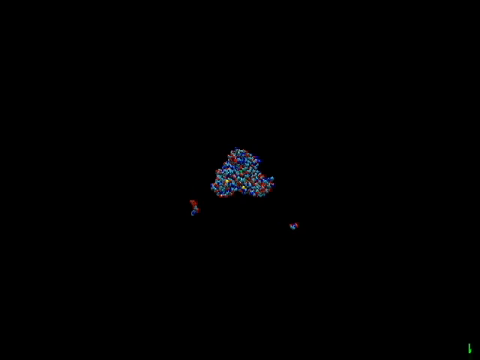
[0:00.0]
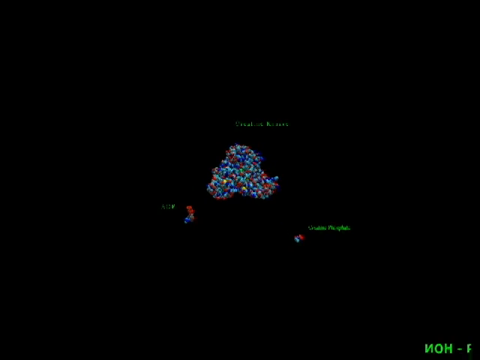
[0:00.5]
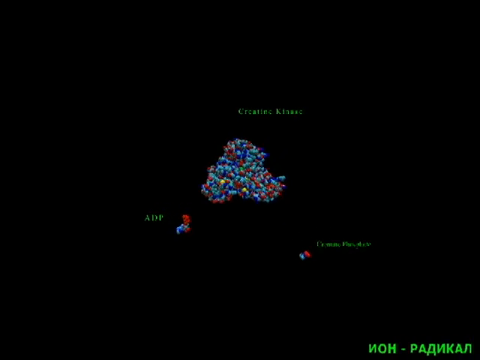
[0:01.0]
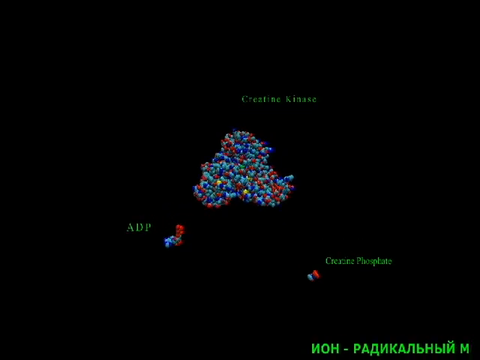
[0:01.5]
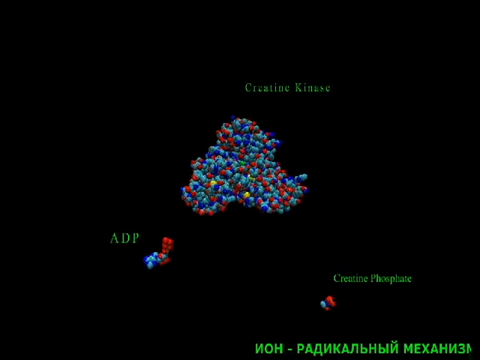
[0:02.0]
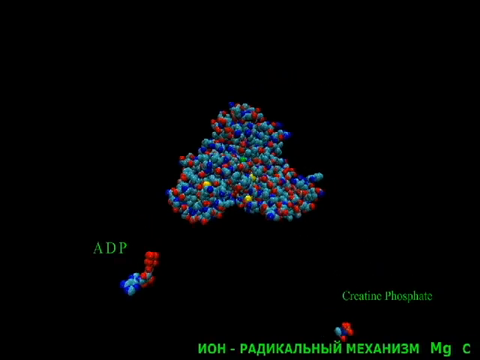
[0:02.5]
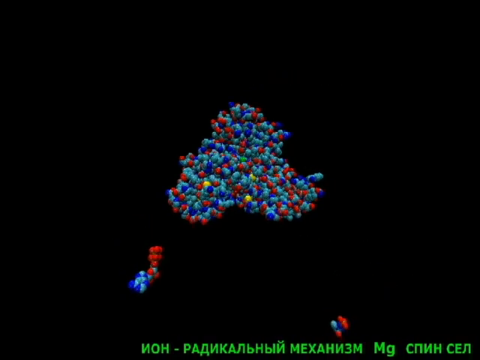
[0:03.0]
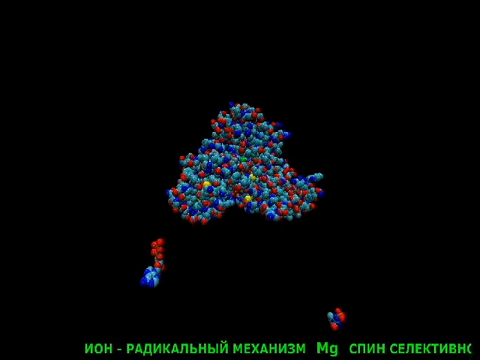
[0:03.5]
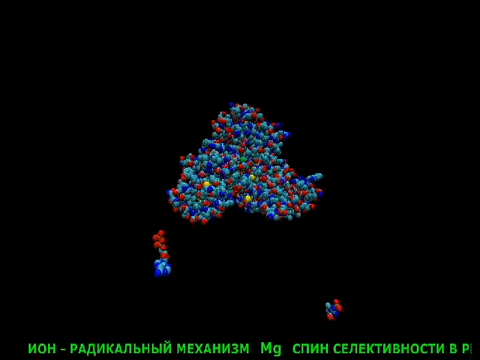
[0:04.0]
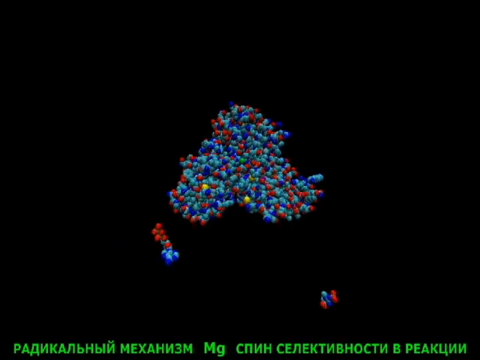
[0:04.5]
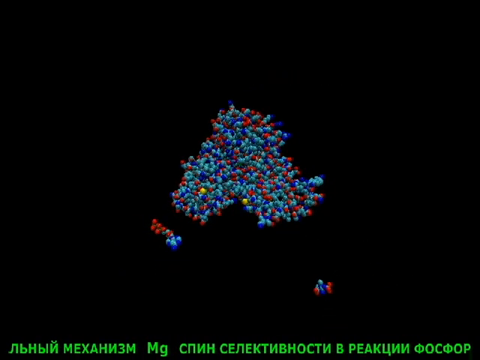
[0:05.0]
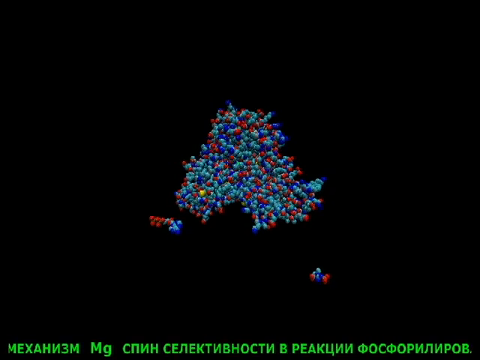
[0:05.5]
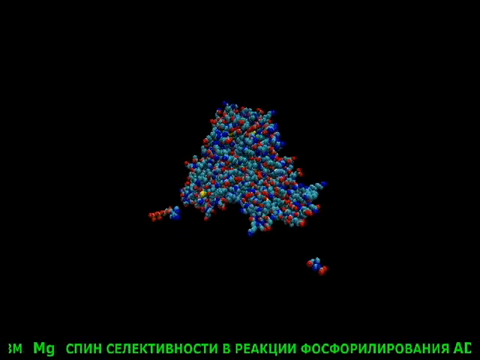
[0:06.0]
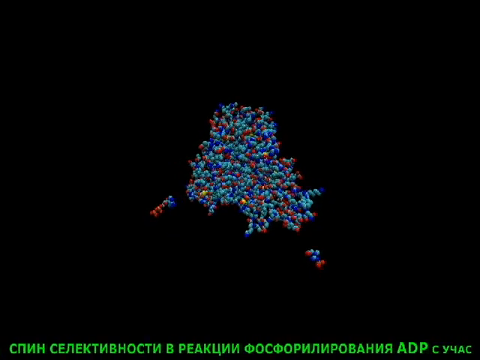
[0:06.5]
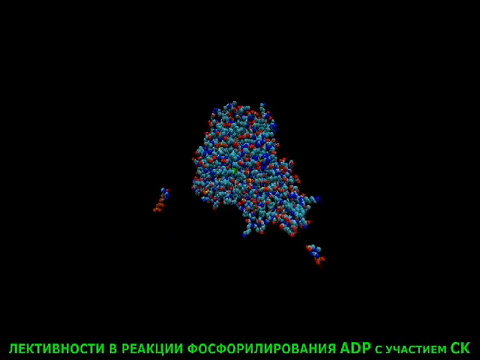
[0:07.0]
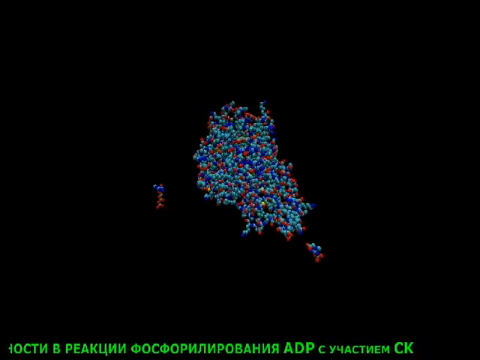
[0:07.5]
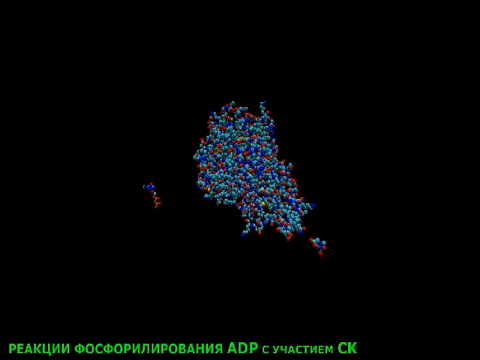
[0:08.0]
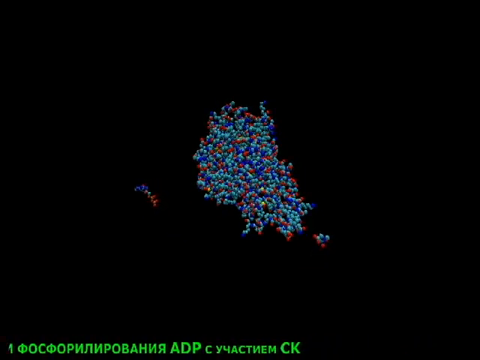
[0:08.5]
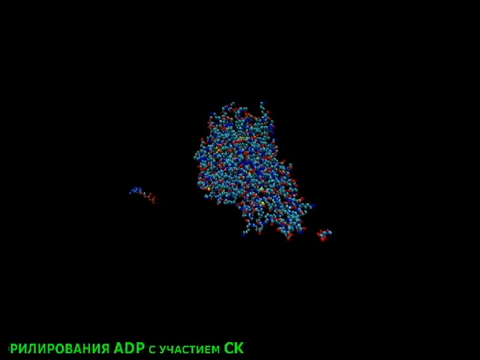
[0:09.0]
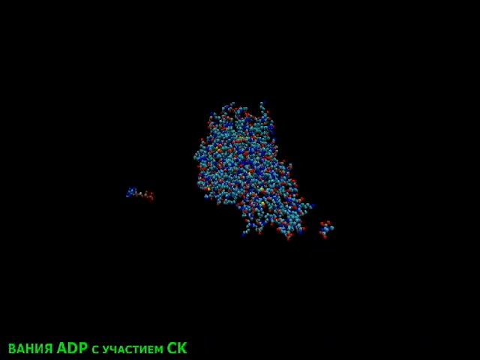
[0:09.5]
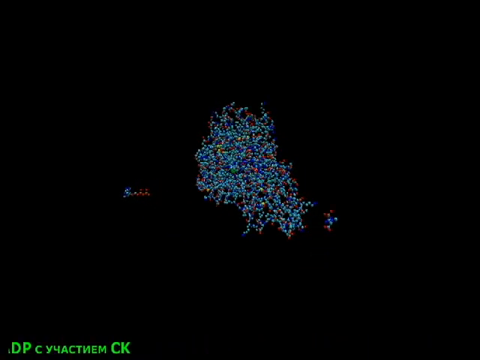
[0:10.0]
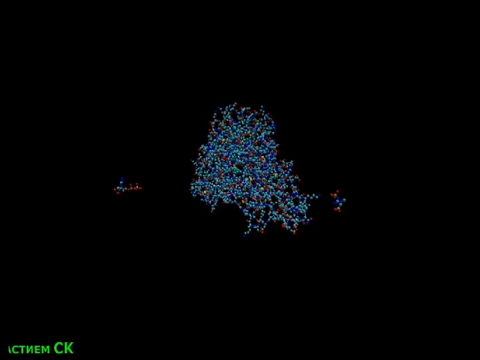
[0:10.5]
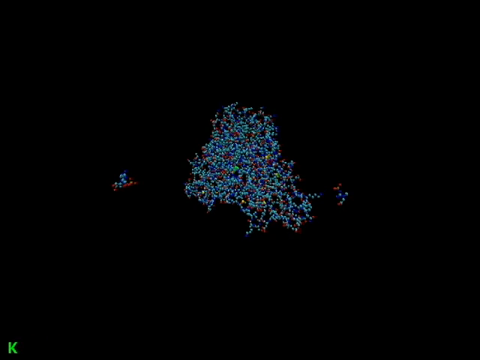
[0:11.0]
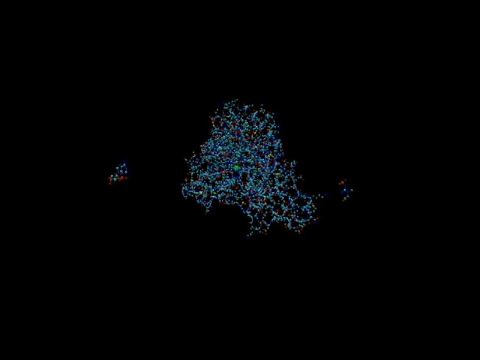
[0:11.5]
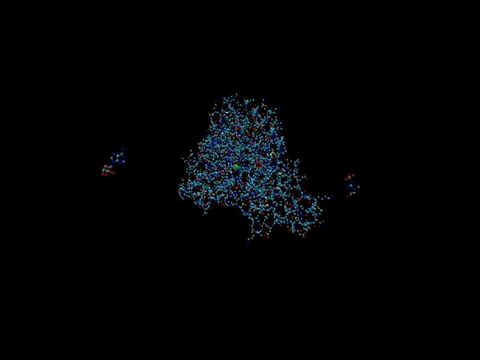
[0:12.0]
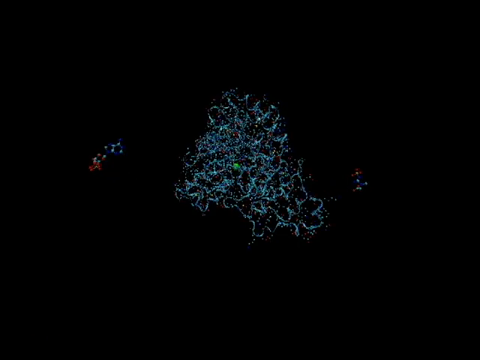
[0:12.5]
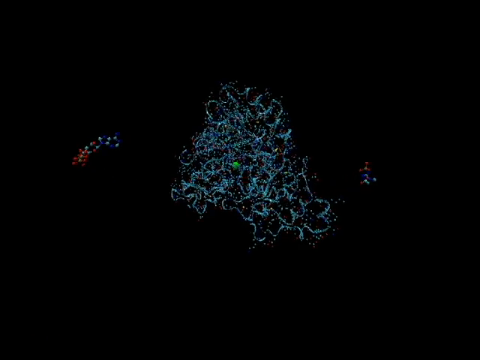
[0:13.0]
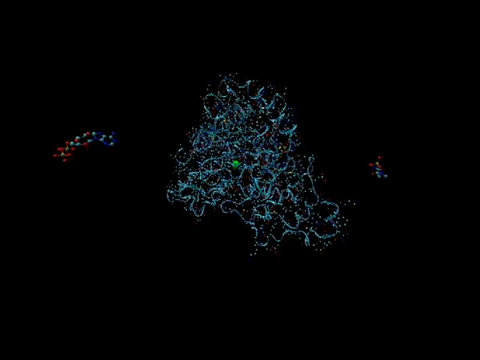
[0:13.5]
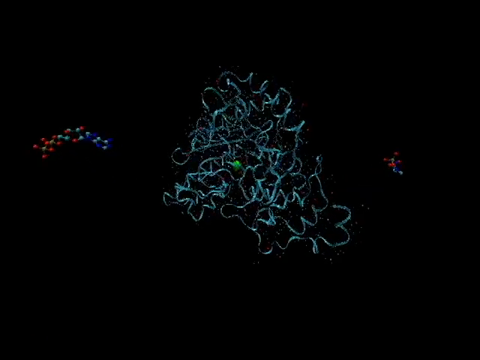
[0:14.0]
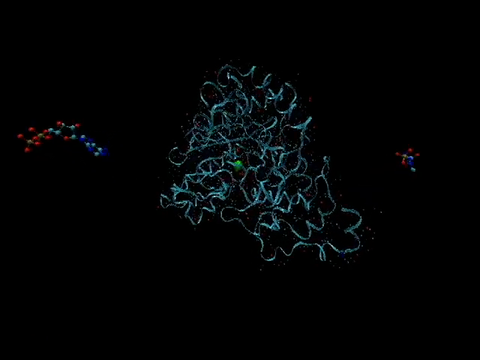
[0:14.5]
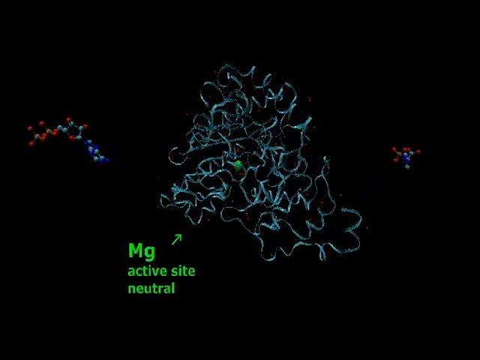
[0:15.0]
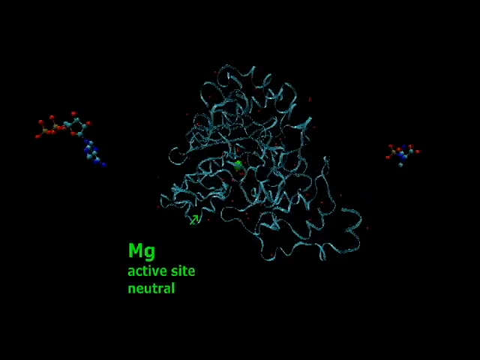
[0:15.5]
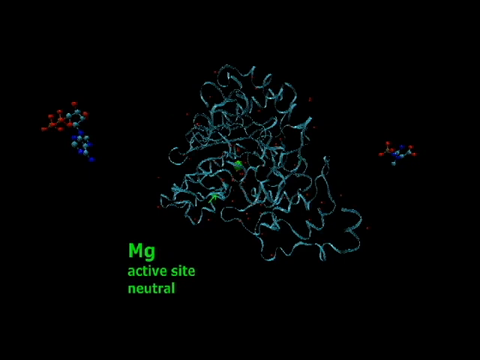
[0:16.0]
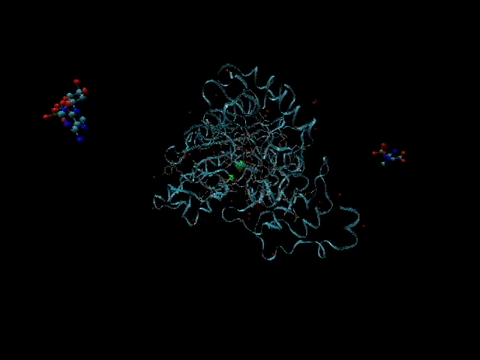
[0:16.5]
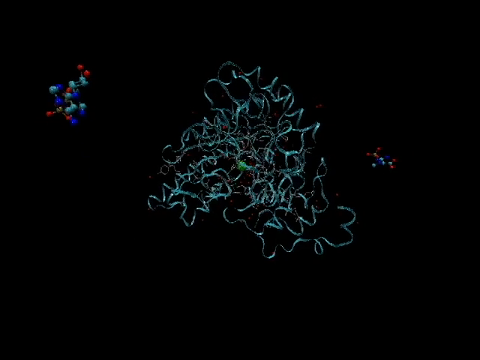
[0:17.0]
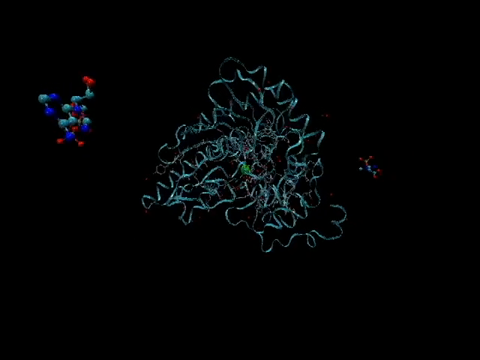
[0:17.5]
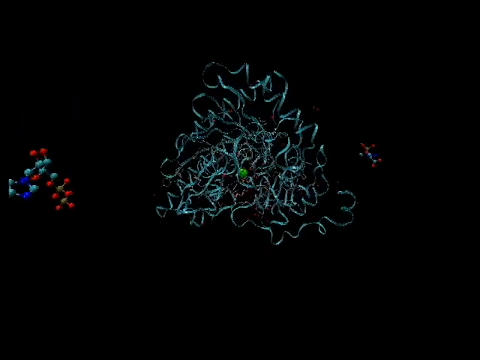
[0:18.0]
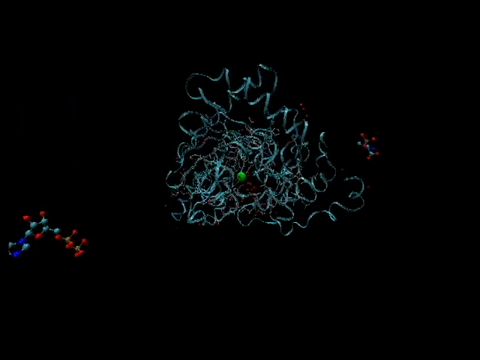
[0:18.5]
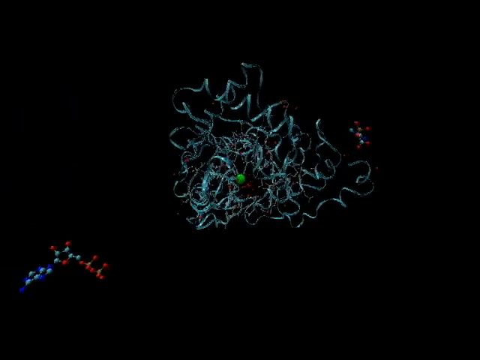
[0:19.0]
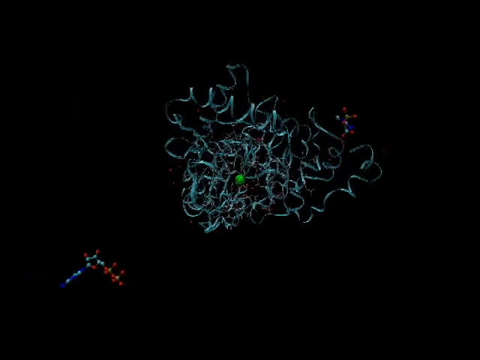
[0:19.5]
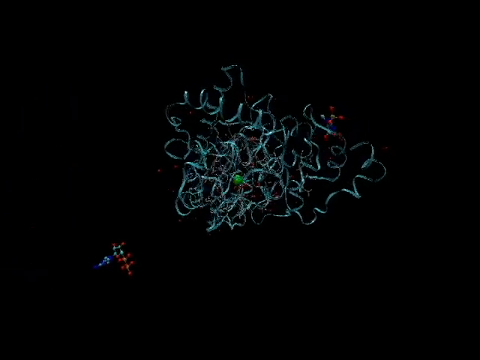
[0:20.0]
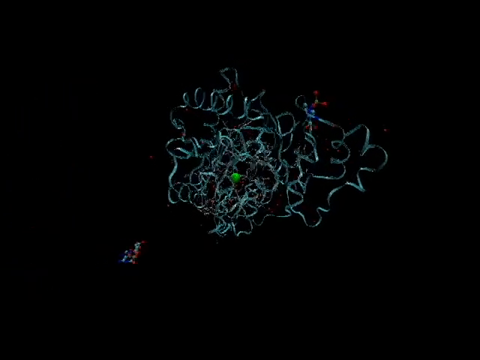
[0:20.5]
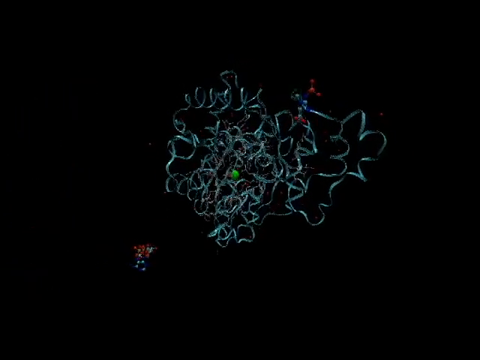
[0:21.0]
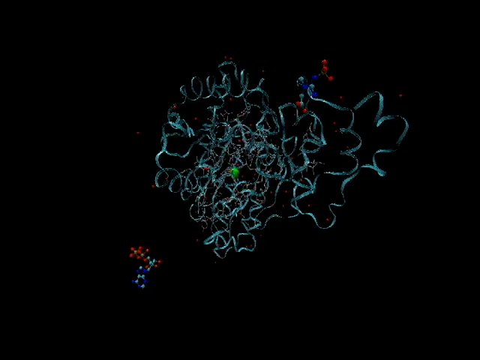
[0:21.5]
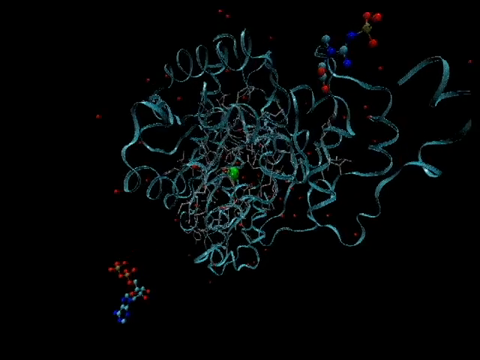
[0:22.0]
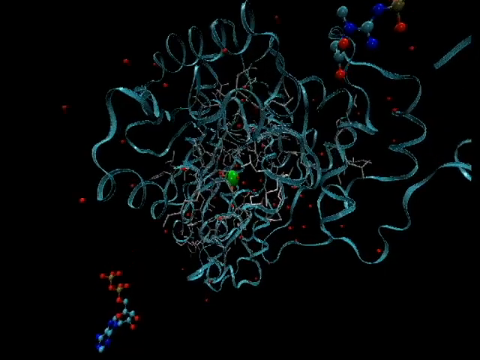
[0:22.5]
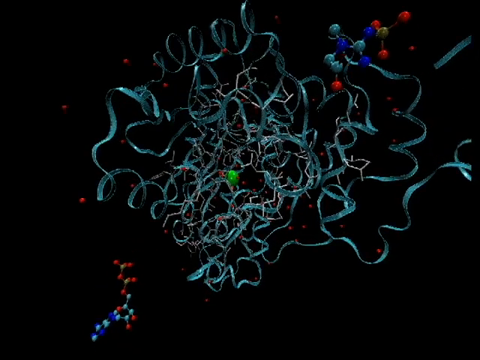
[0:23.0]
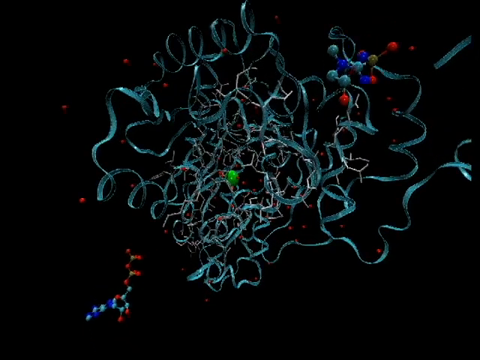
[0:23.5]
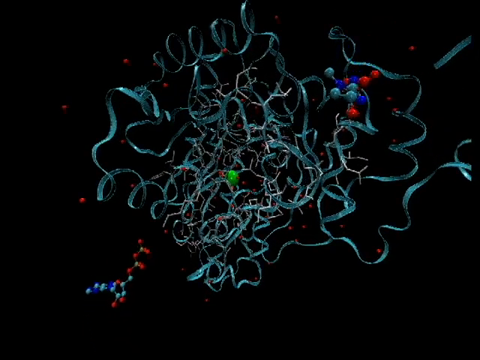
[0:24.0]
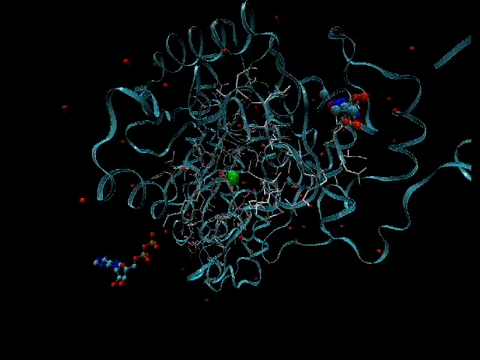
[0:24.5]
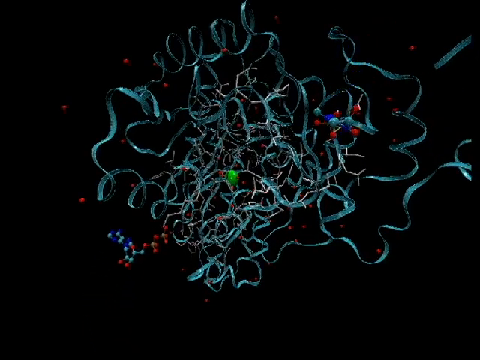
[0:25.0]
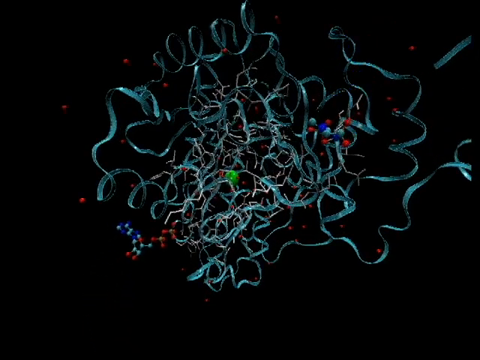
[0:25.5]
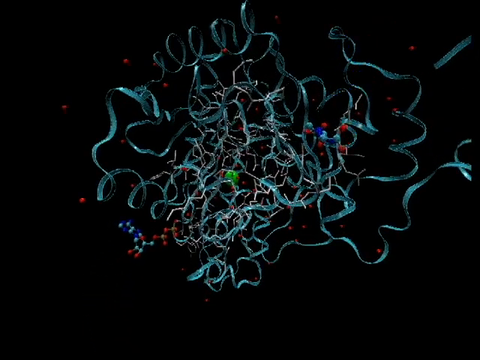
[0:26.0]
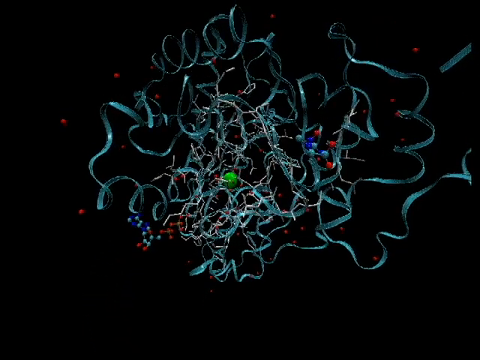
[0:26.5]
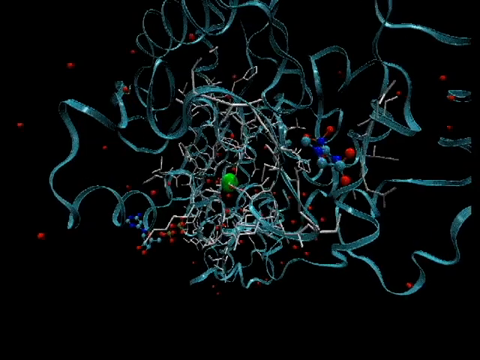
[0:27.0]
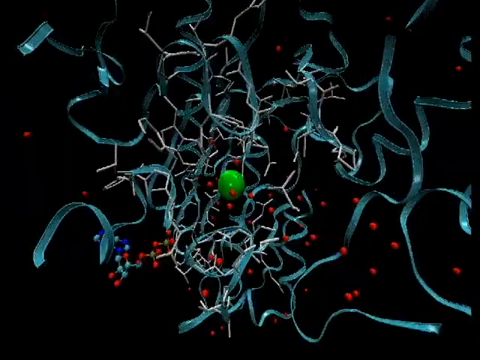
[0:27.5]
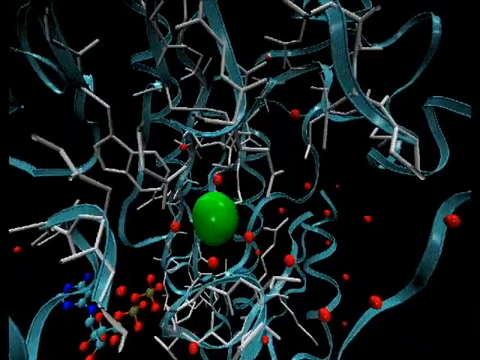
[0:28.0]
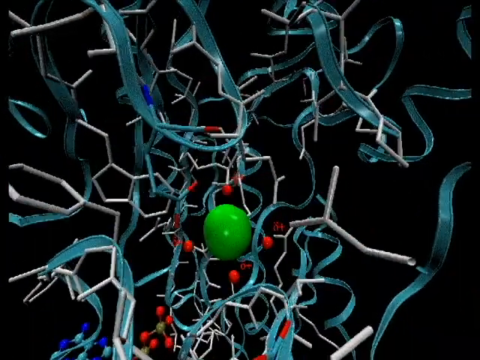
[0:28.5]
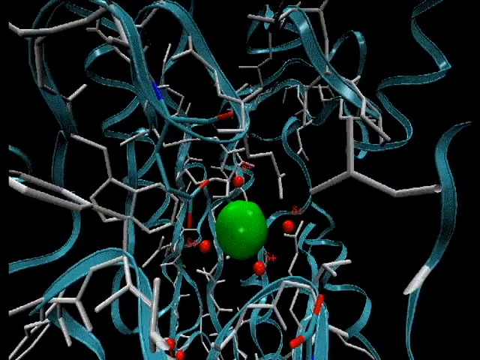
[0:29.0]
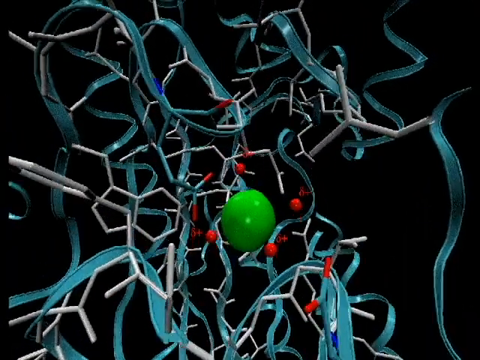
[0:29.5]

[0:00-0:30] A computer-generated three-dimensional representation shows three molecules: ADP, a fairly small one; creatine phosphate, the smallest; and creatine kinase, the largest and most complicated, which is apparently a protein. It starts with a fairly zoomed-out view of the three molecules, where only a mass of atoms is visible. The camera then zooms in on the creatine kinase structure, showing what seem to be the three-dimensional strands of the molecule. The main molecule is rotated, and the ADP molecule is as well, so they can be seen from different angles. An arrow appears indicating the active site for Mg, magnesium. The camera zooms in further on this site, and the ADP molecule and the other molecule move in towards the bigger protein, demonstrating how they bond with each other.